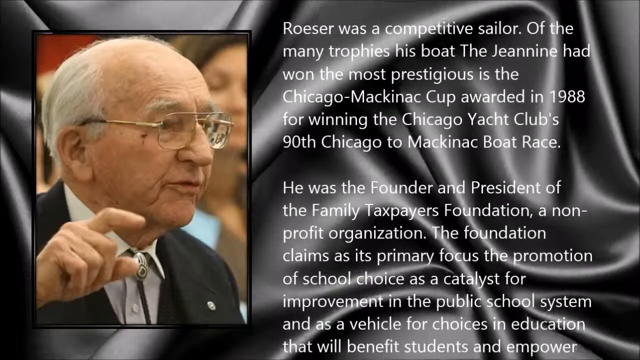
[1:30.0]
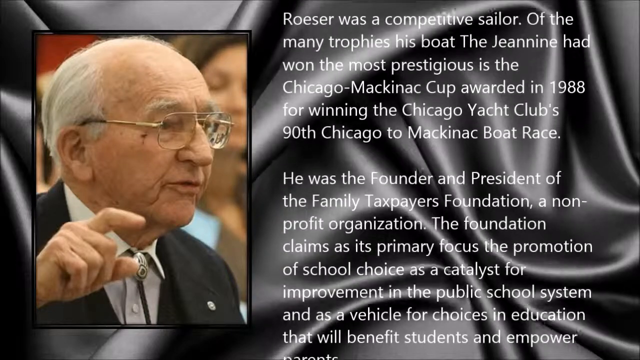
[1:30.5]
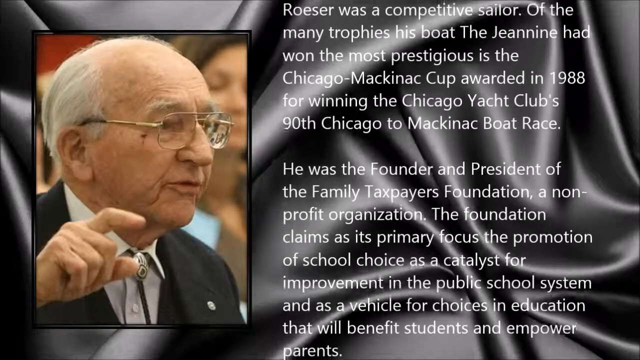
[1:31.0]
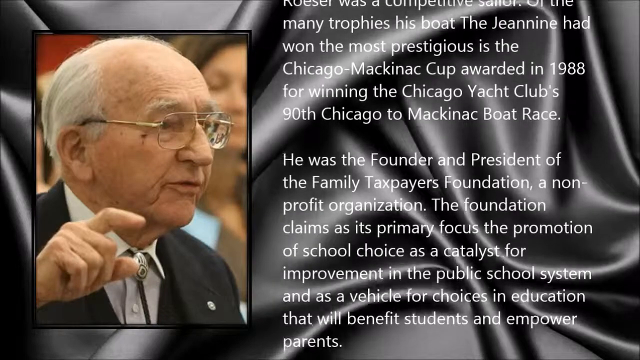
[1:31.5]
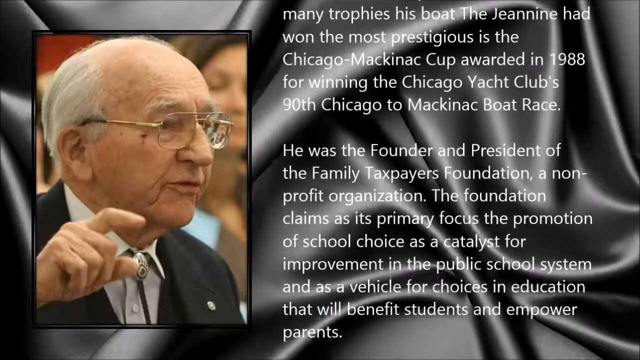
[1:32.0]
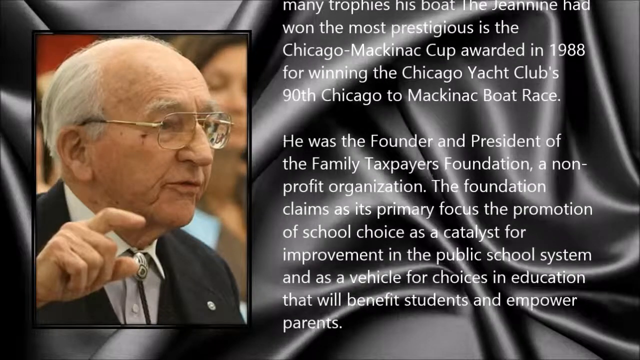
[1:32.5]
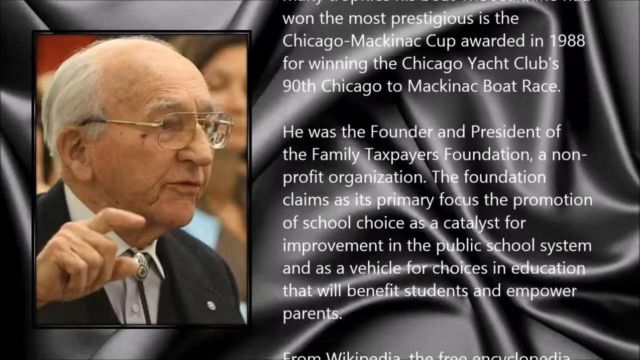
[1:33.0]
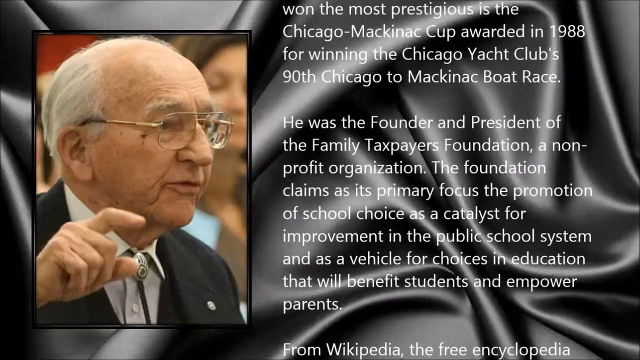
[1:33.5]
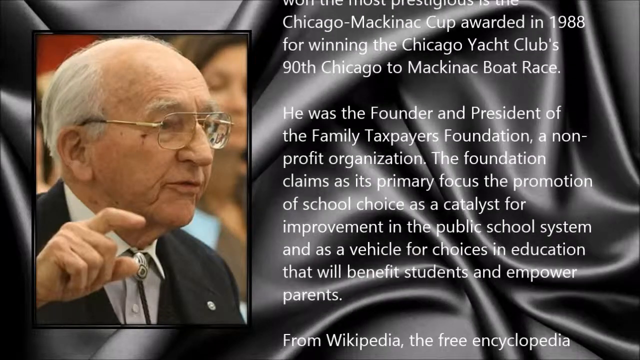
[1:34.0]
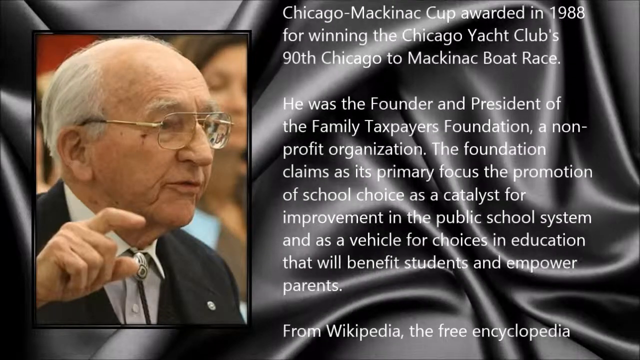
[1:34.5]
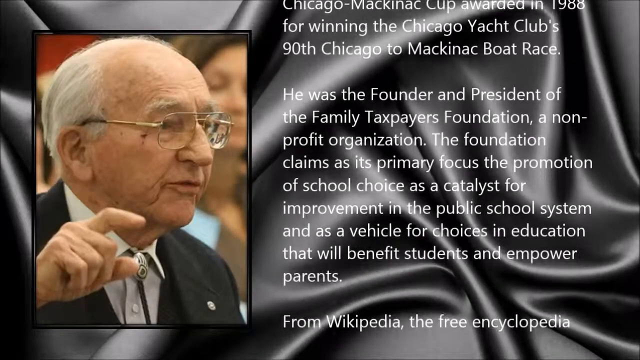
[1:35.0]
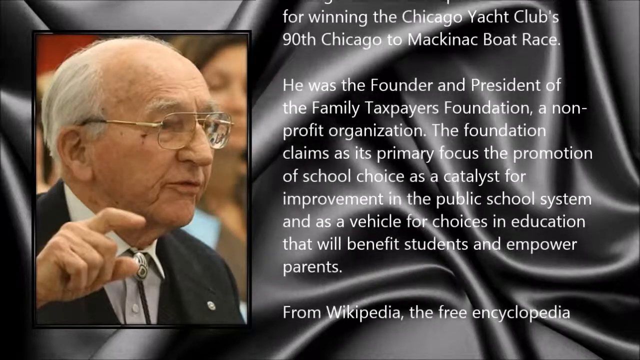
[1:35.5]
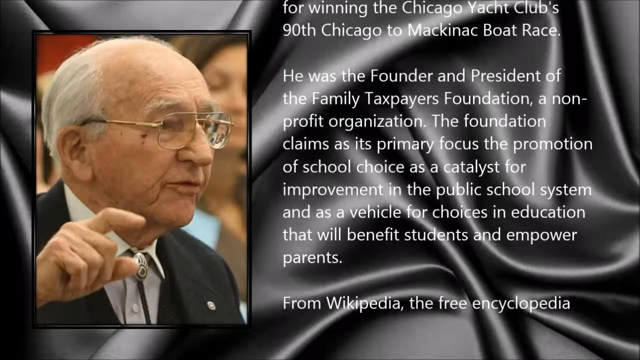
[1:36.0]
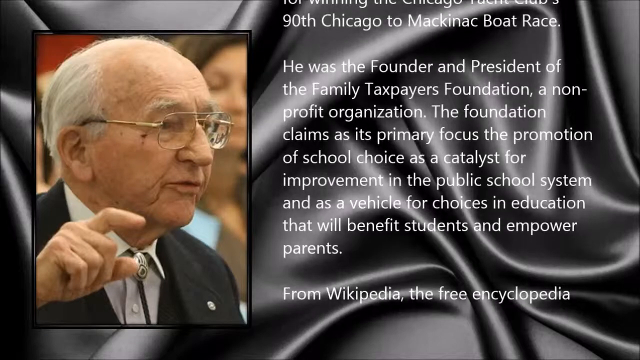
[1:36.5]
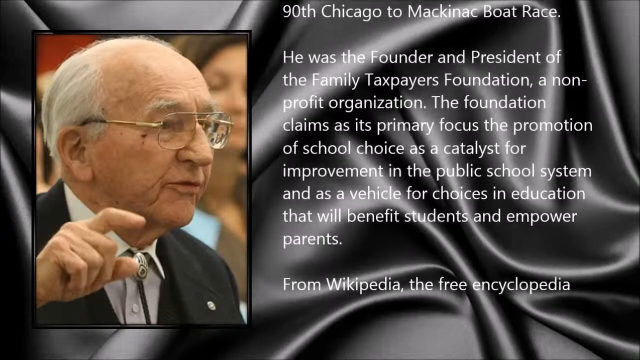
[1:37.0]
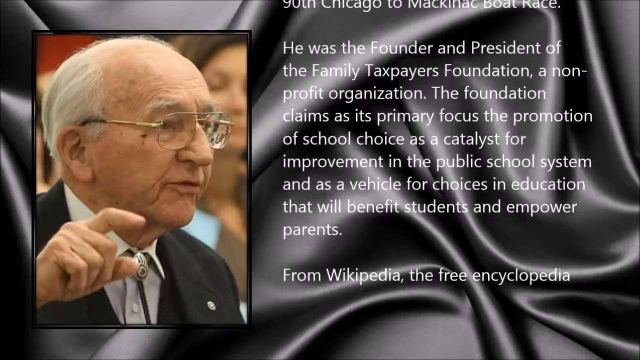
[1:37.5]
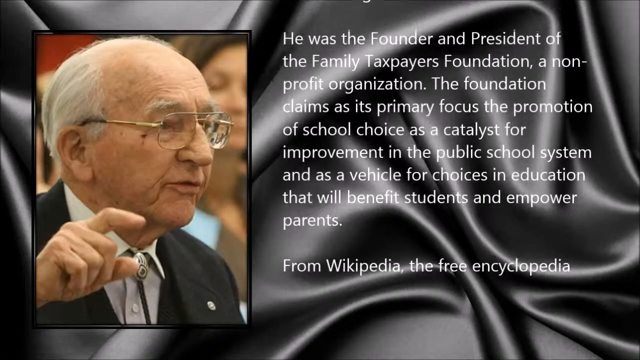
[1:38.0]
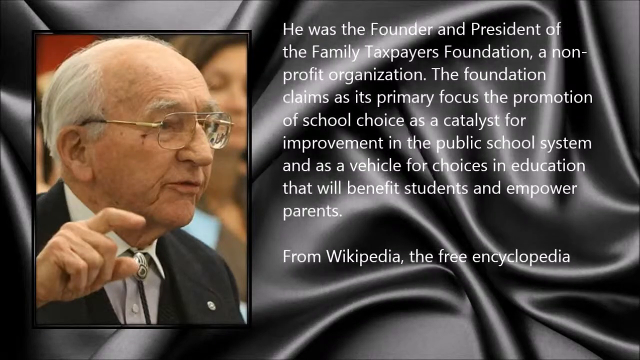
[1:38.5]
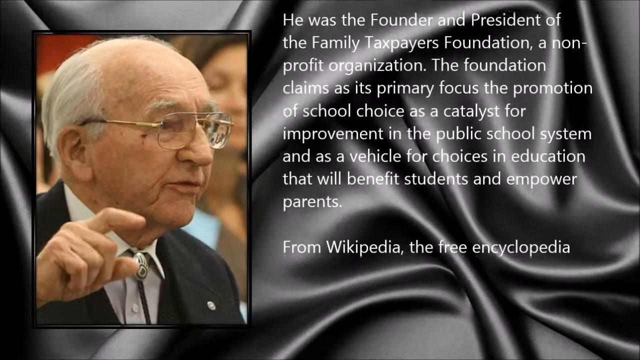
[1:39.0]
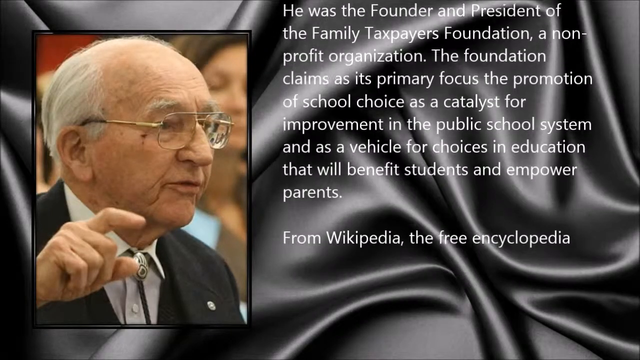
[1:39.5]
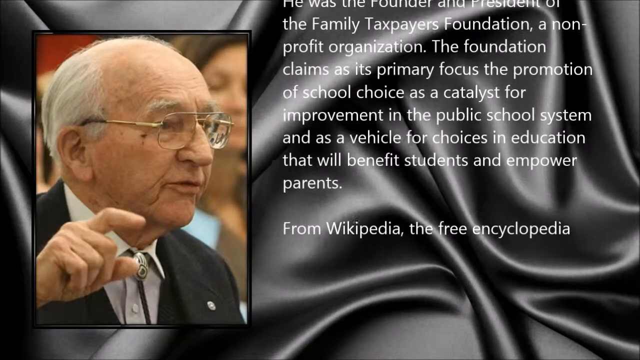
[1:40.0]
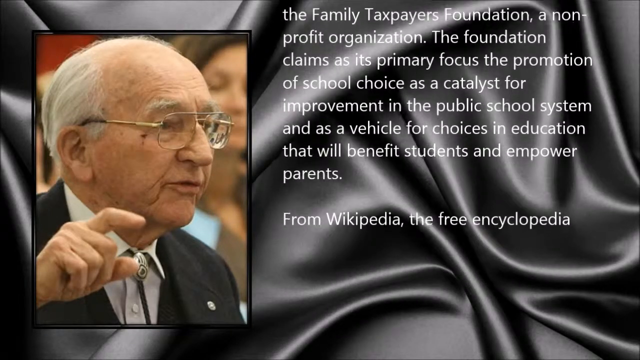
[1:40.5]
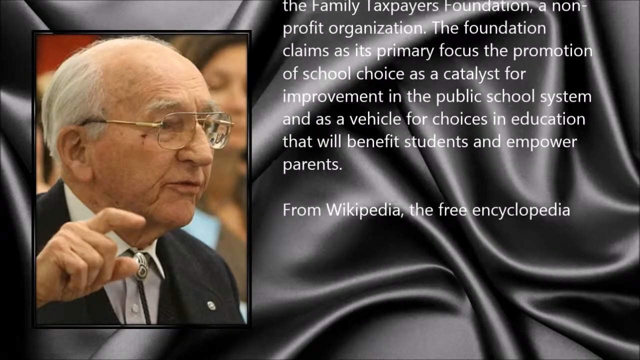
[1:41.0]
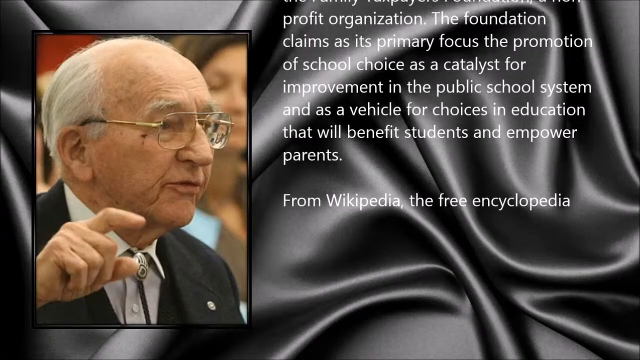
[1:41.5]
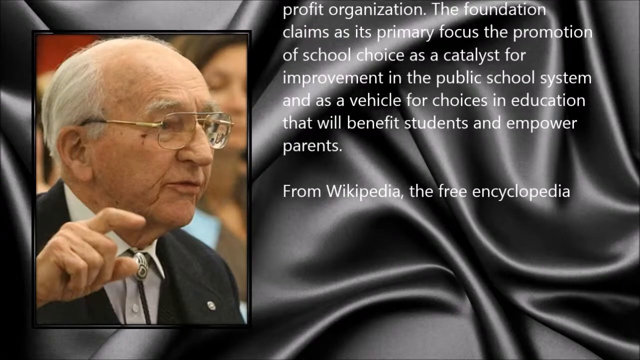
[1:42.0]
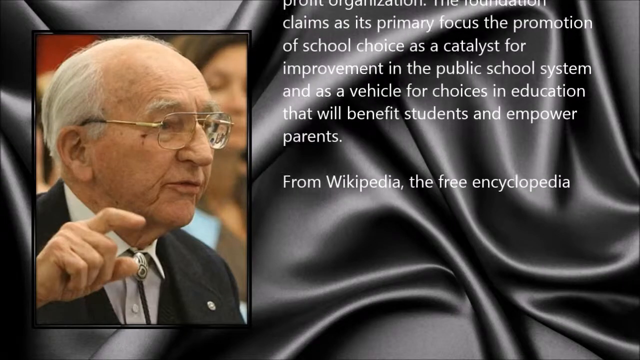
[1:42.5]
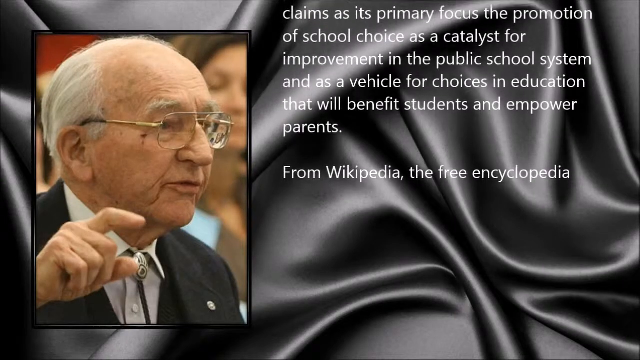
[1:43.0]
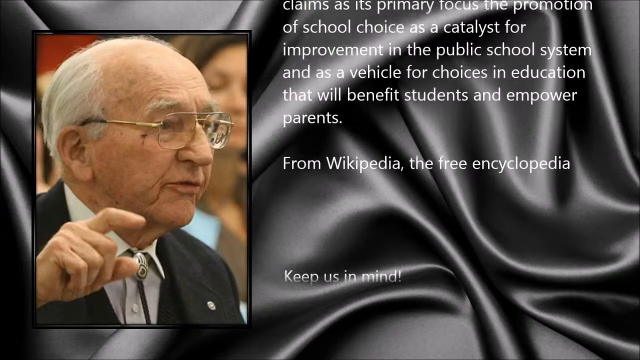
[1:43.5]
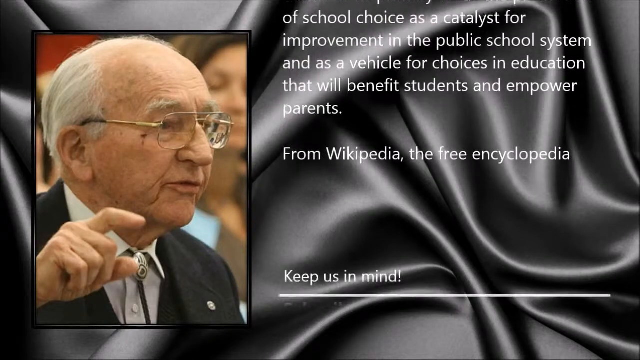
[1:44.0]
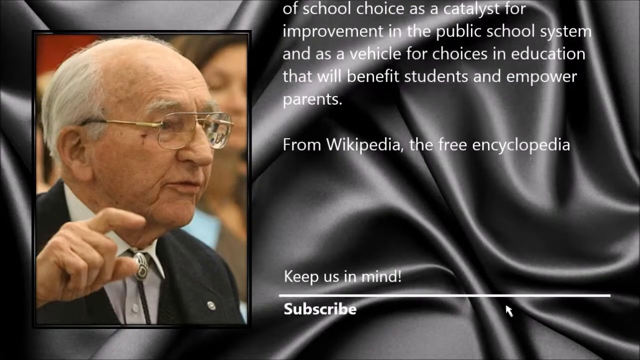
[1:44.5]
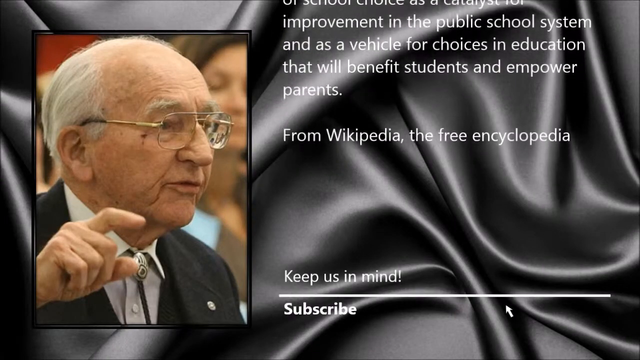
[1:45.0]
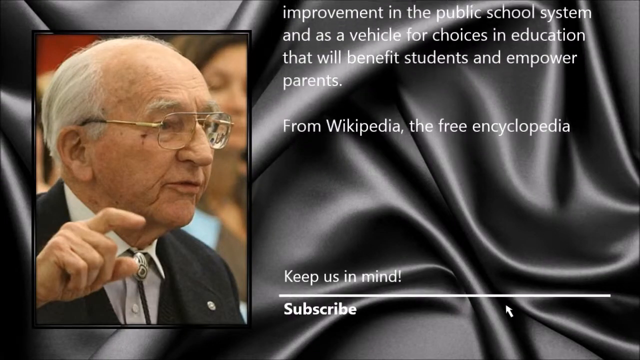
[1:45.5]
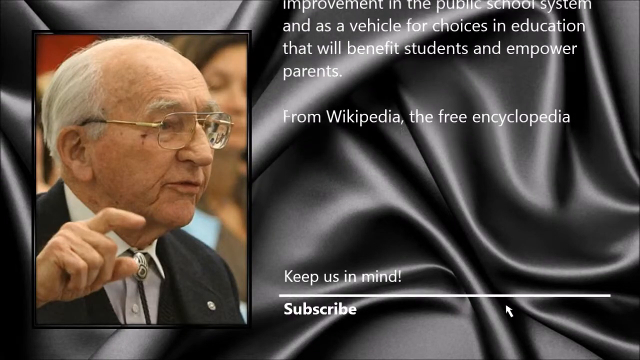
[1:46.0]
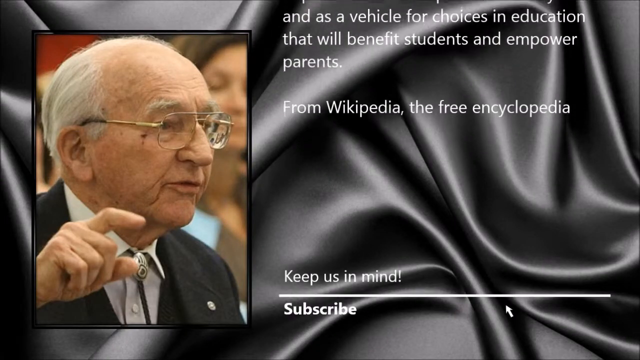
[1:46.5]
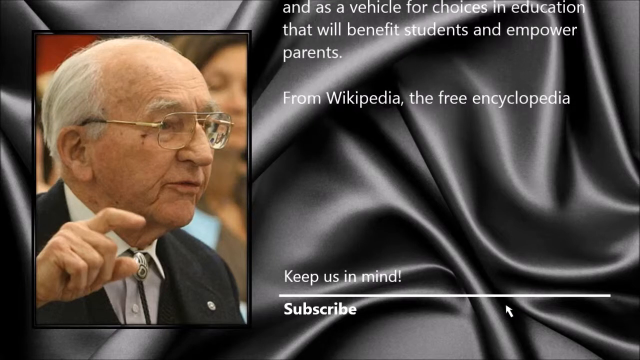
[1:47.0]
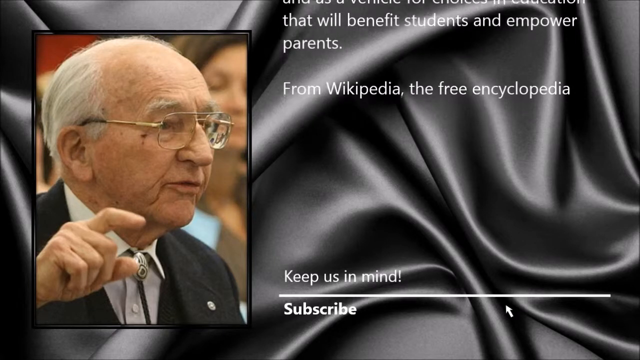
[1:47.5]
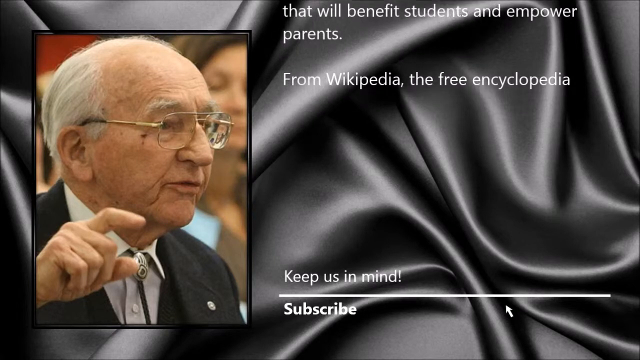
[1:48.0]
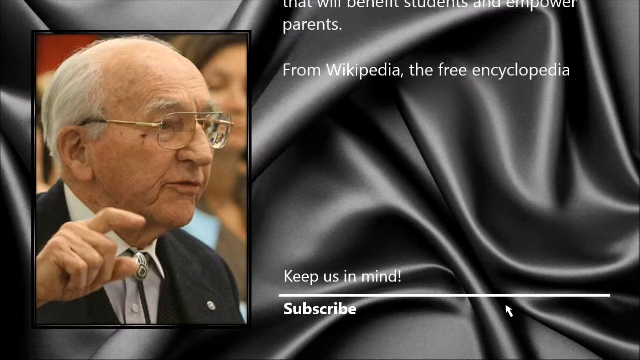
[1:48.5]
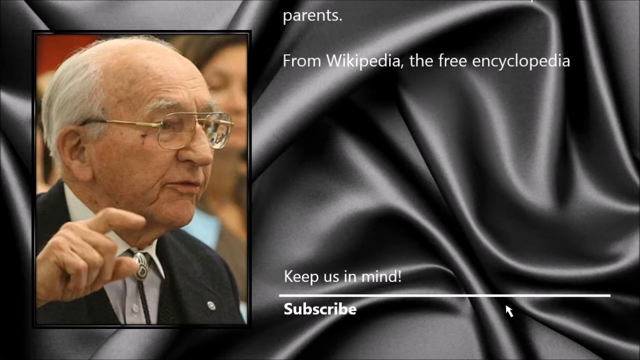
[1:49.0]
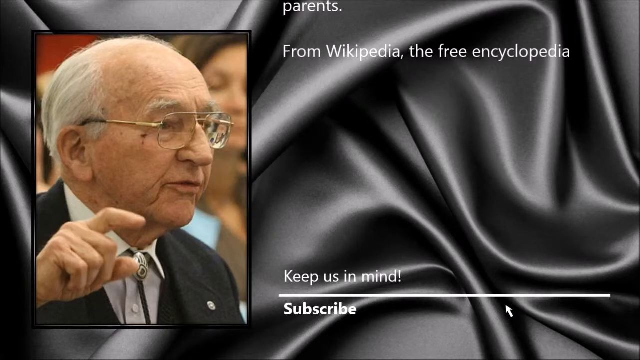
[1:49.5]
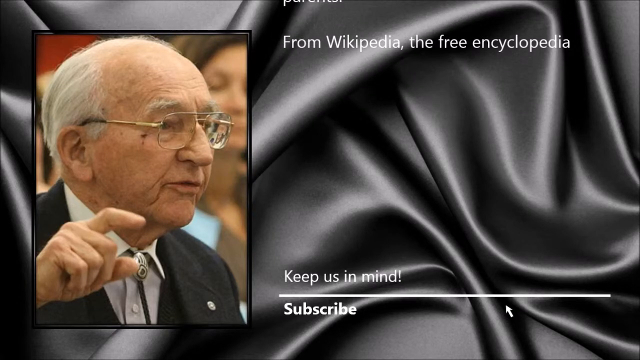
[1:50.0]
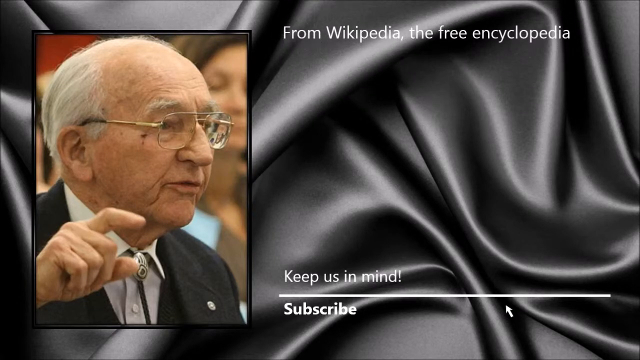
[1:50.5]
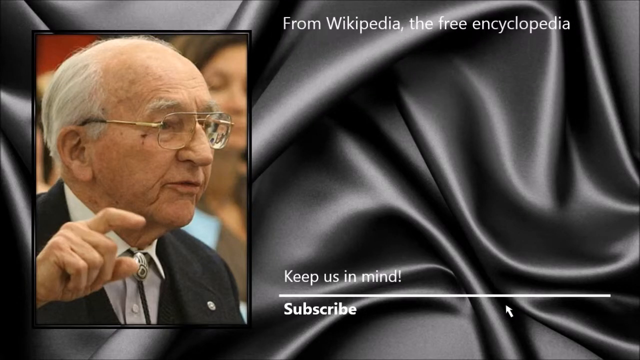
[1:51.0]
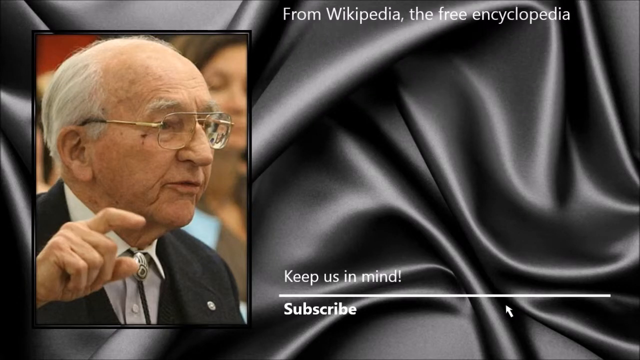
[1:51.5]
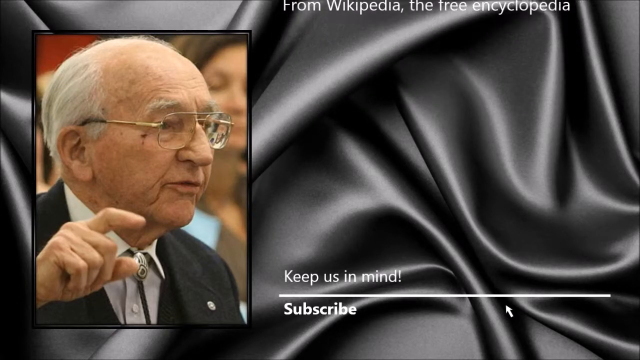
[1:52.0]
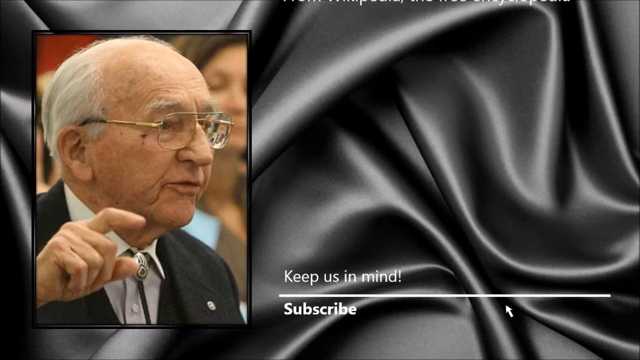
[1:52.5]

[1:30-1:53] The same picture remains on the left, and on the right the white text continues to scroll upward from the bottom over the dark gray silk background, making it very easy to read. The text reads "From Wikipedia, the free encyclopedia," suggesting the information about his life was taken from Wikipedia articles. At the bottom of the screen, non-scrolling white text reads "keep us in mind, and then subscribe." The scrolling text continues upward until it is out of the screen, while the picture on the left and the dark gray silk background stay the same. The video tells the story of his life, possibly to be played at his funeral or memorial service.